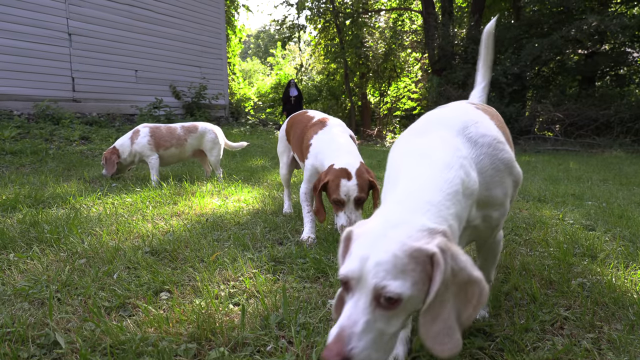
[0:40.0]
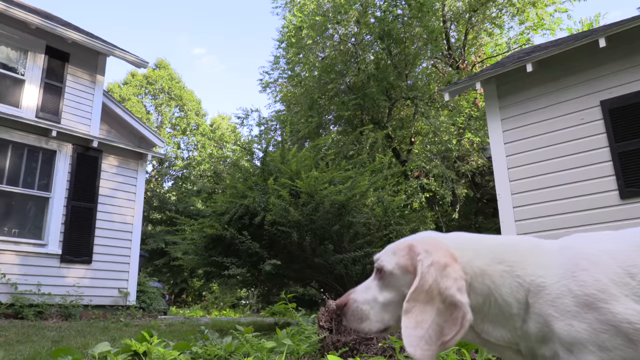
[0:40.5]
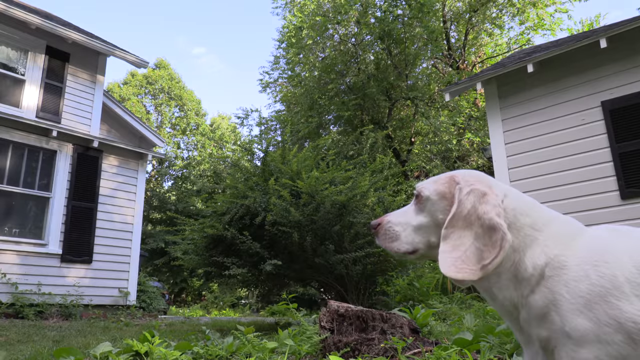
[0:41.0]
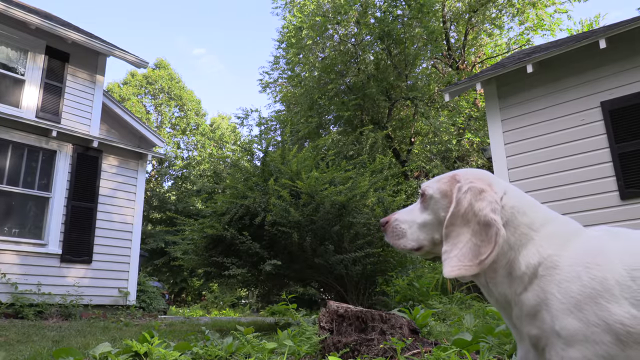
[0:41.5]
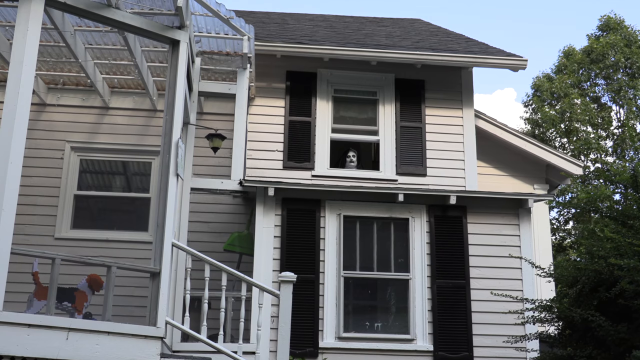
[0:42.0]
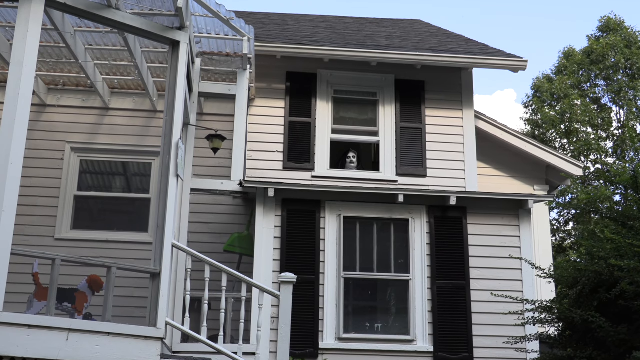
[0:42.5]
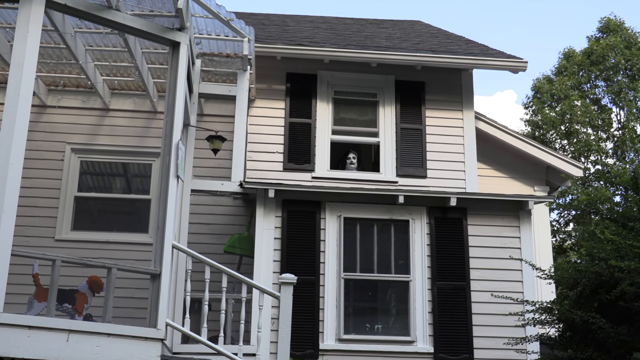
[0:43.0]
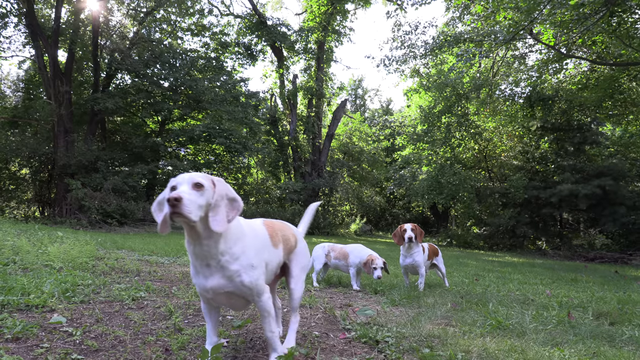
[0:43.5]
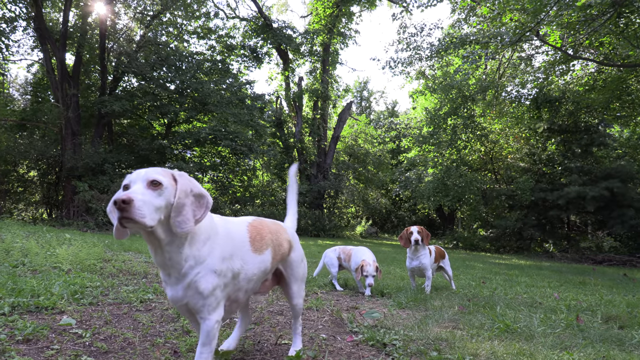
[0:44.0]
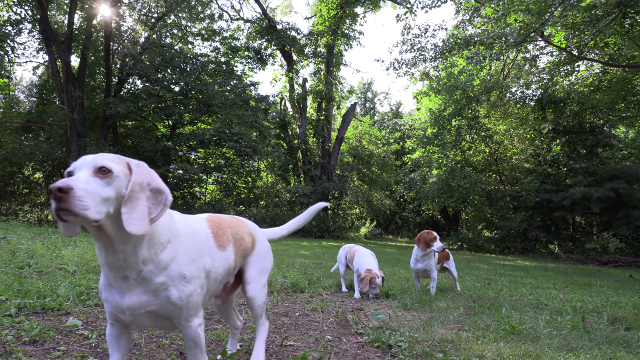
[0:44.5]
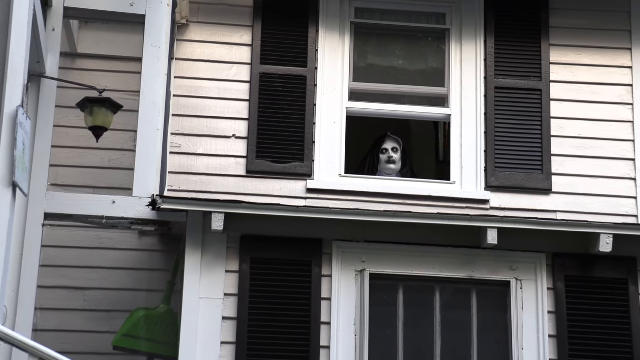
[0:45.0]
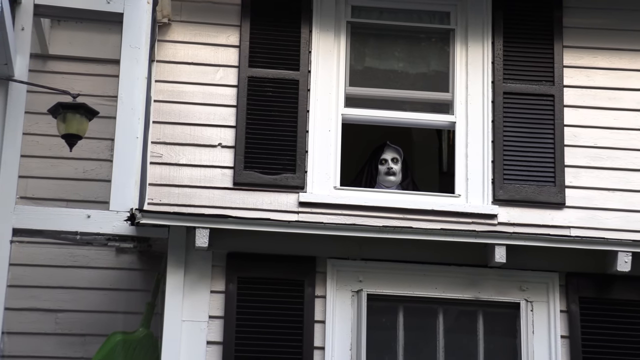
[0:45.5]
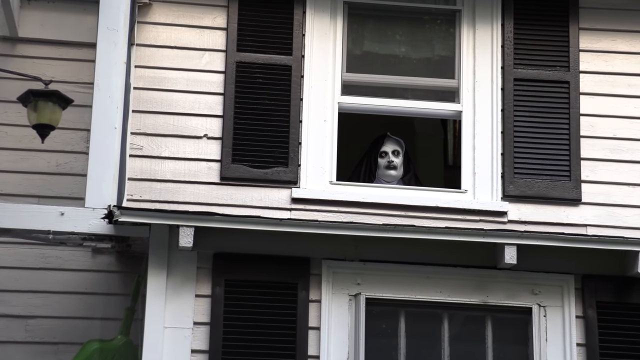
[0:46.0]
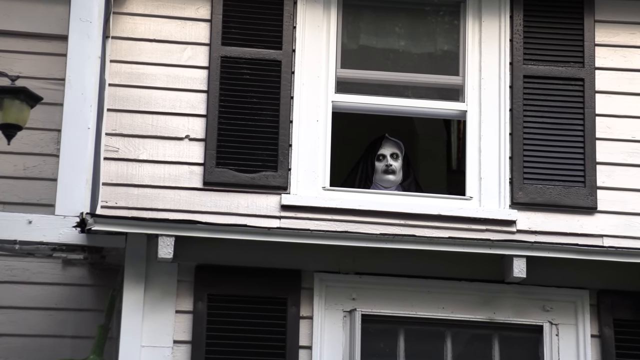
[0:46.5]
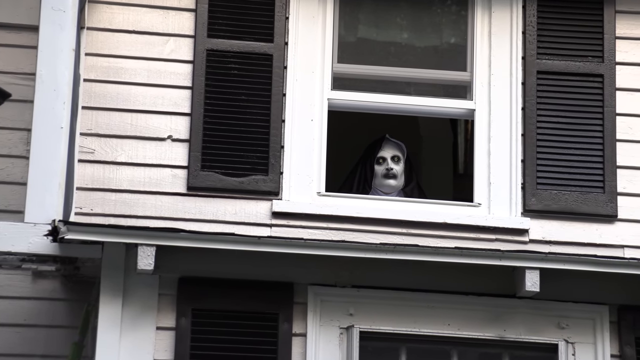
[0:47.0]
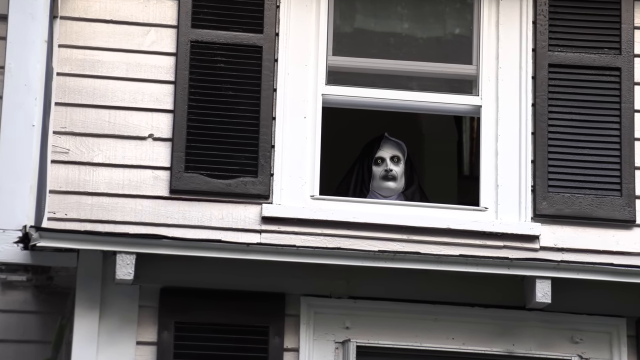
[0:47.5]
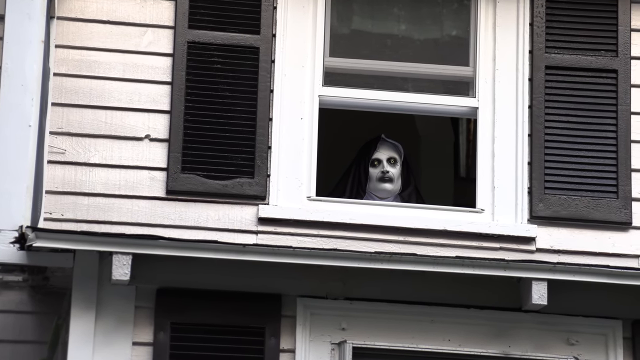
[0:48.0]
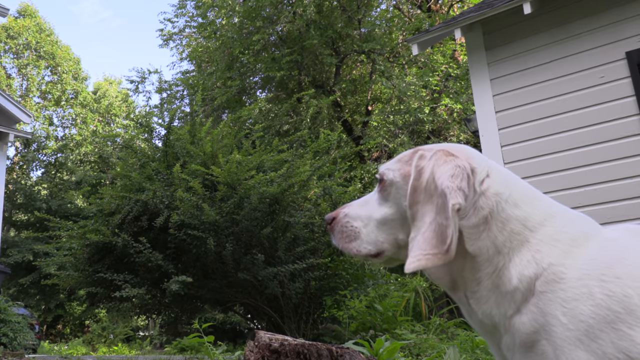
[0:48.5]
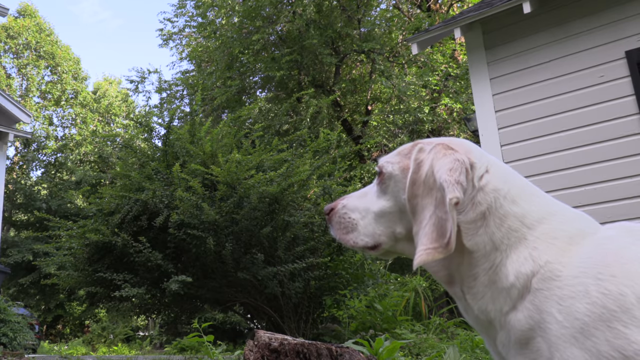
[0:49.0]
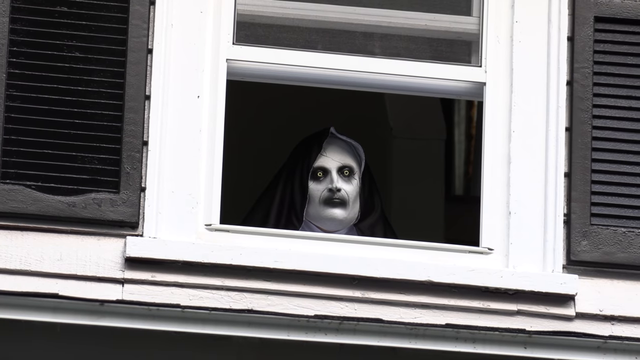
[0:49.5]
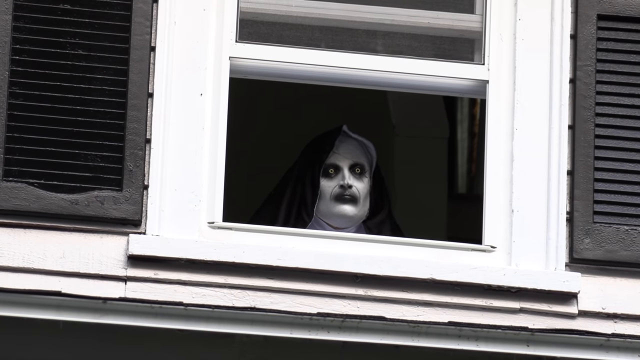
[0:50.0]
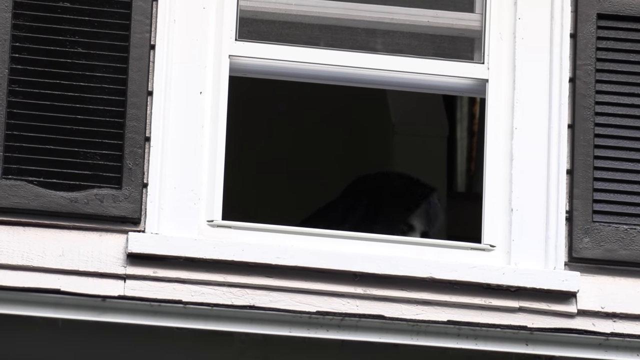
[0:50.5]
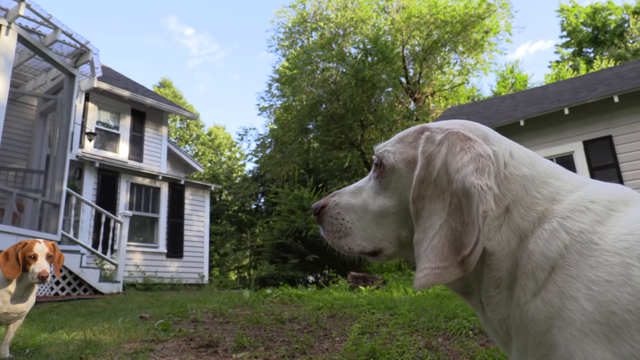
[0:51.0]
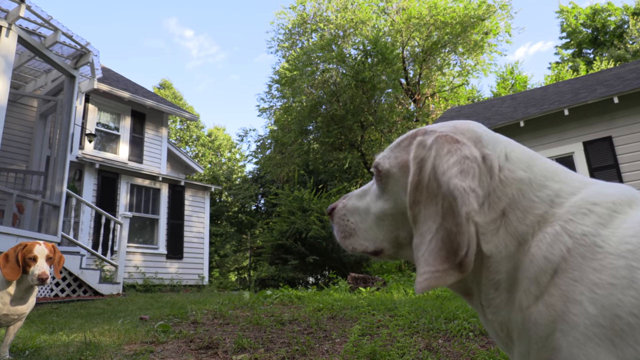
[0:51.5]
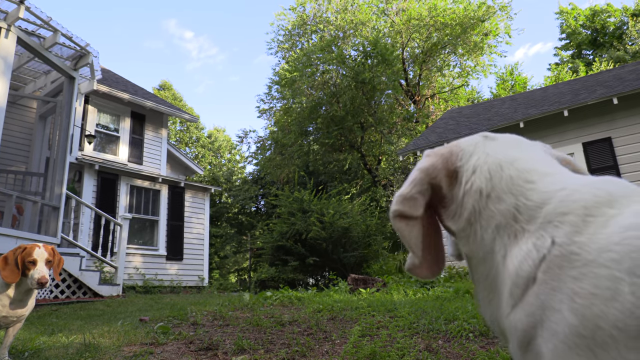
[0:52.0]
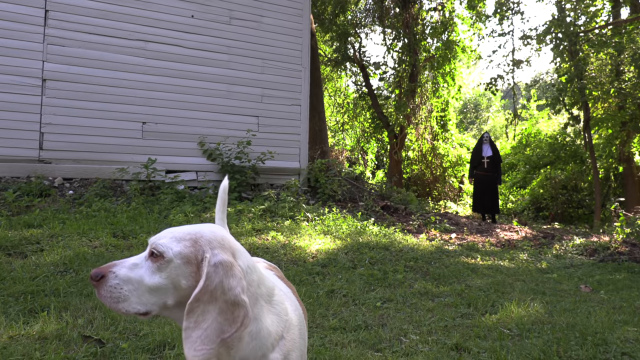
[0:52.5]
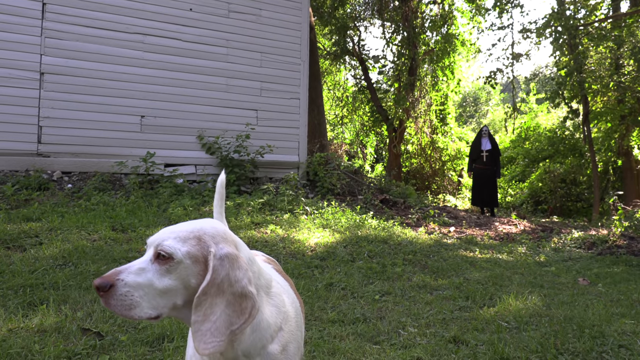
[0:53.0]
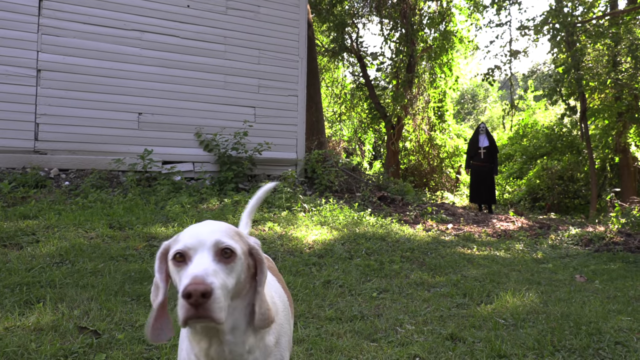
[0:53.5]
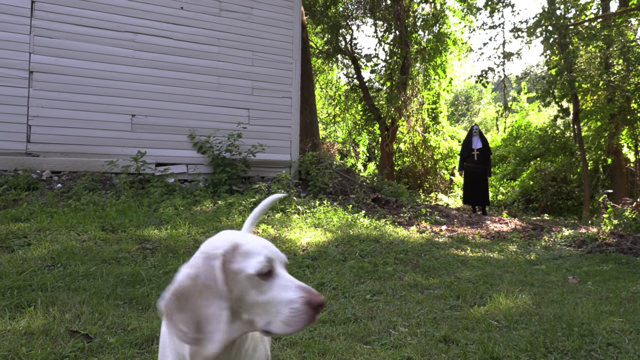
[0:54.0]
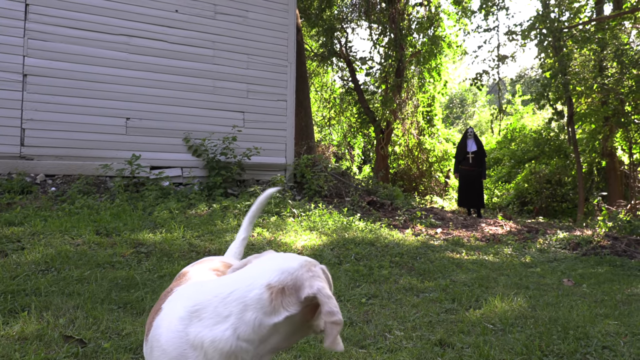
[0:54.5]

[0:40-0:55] Three dogs are outside sniffing and eating the grass. One, completely white except for a light brown spot near his back, looks up at the window, where the creepy demon nun is looking outside. The shots go back and forth between the dog and the nun, and for the first time the dog looks at the nun without the nun disappearing. The nun clearly walks out of the window frame into the shadows, and immediately after is seen in the farthest entrance of the backyard where the dog is. The dog looks over and sees the nun.